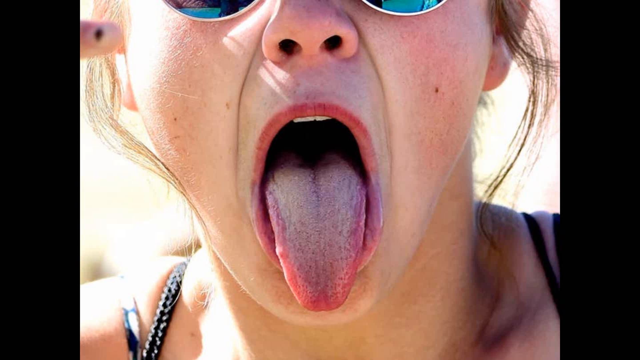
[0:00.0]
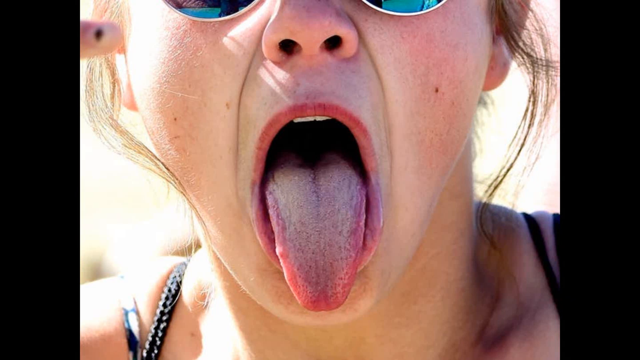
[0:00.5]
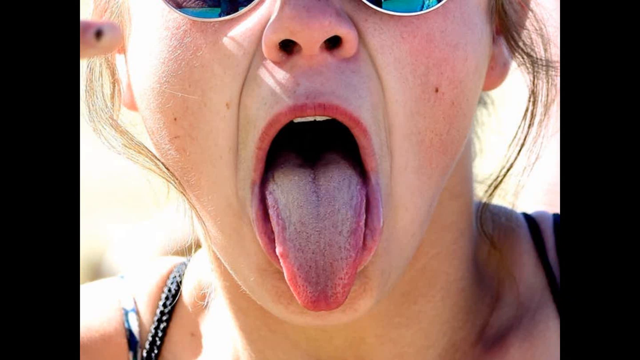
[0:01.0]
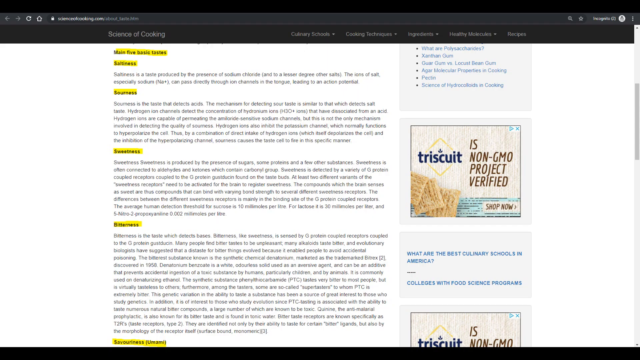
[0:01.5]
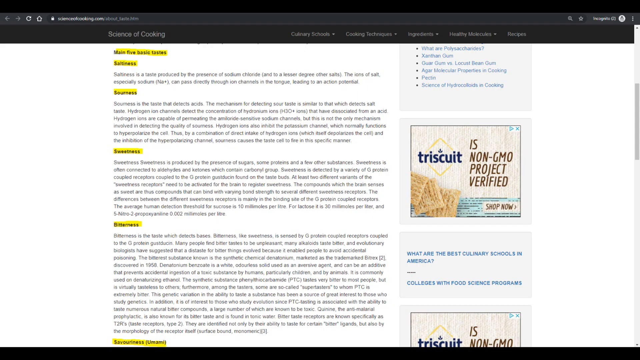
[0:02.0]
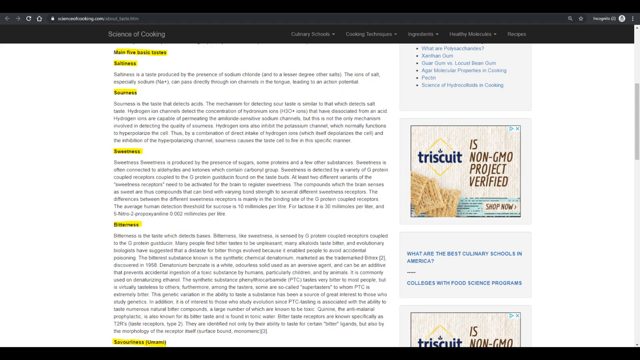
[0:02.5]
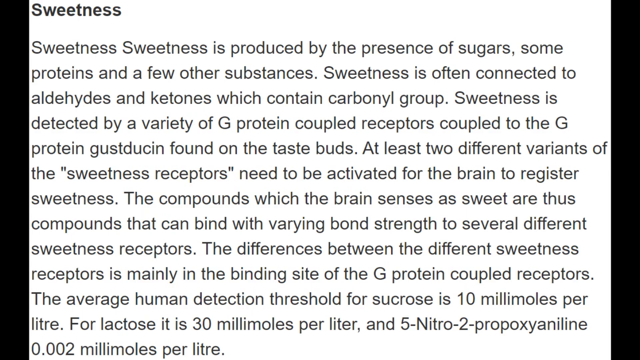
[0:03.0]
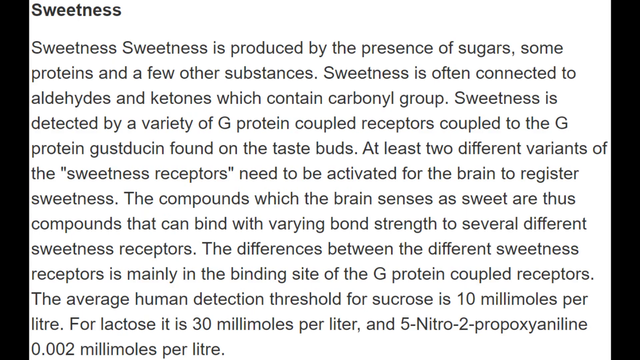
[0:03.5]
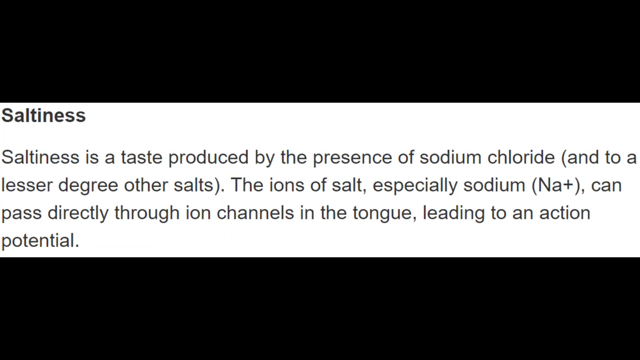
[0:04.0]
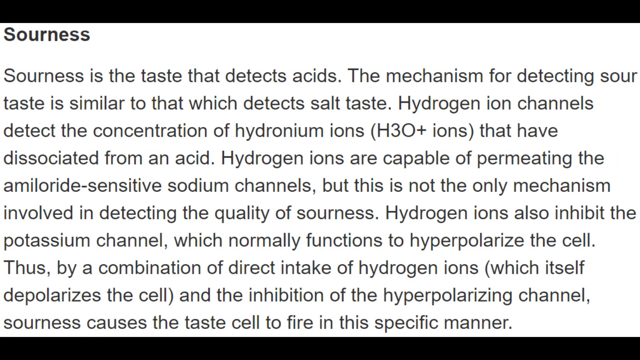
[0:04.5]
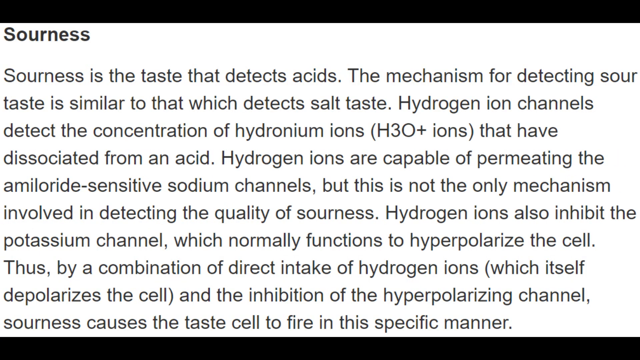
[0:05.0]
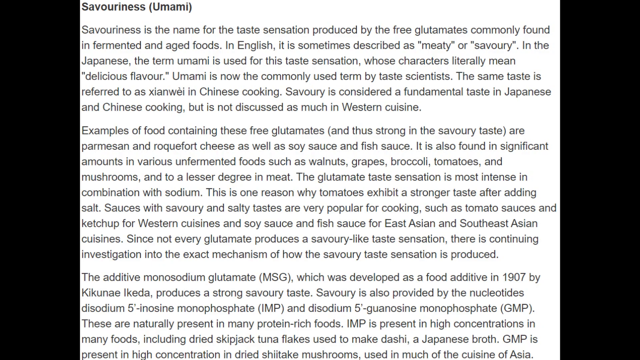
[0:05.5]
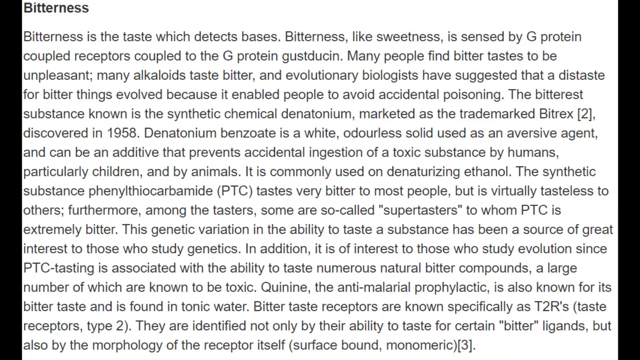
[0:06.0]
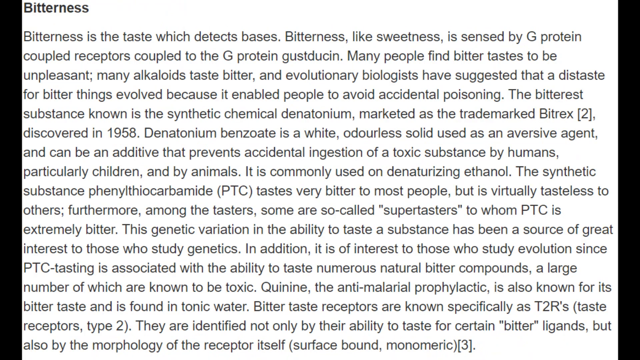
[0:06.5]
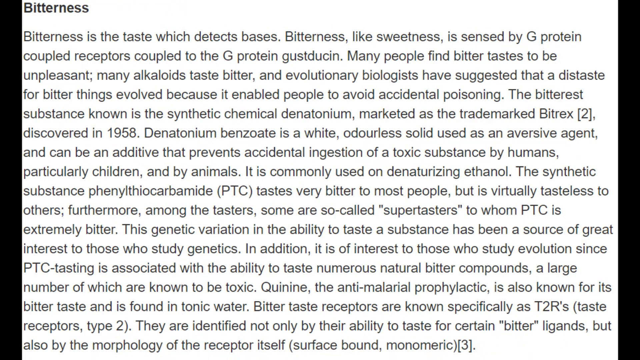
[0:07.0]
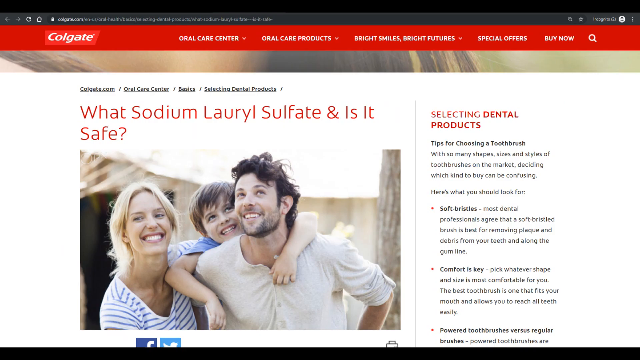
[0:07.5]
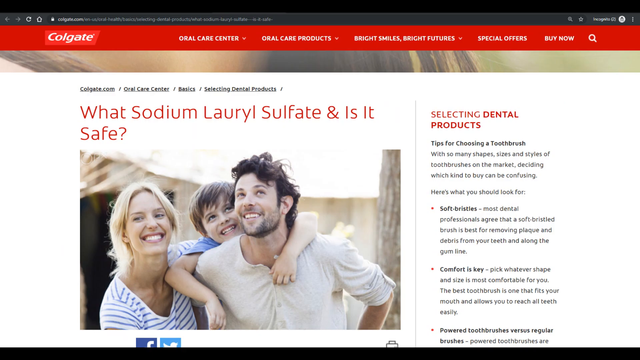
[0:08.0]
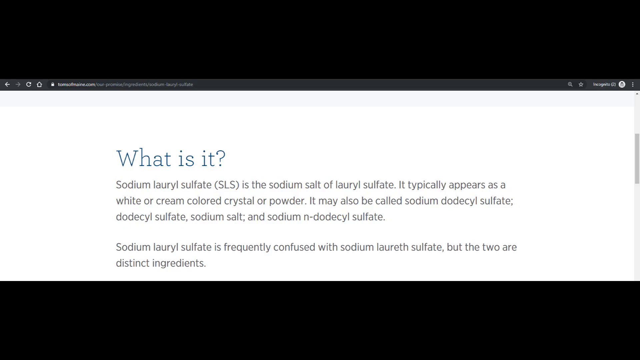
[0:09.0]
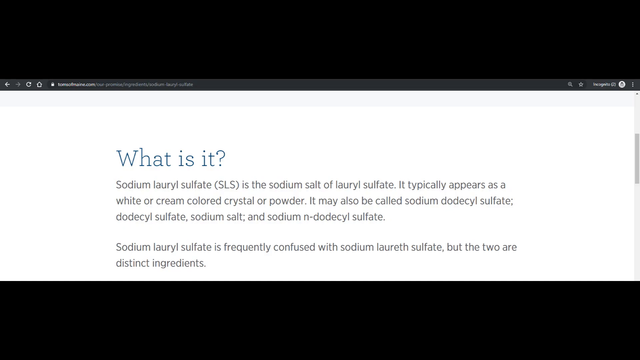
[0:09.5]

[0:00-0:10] A website page from Science of Cooking covers how the sense of taste works, focusing on four key tastes. The page first covers saltiness, caused by sodium or salt passing through channels on the tongue, then sourness, triggered by acidic foods like lemons or vinegar. Next comes a section on sweetness, caused by sugar and similar substances, with sweet foods like candy or fruit. The final section shown is bitterness, found in things like coffee or dark chocolate.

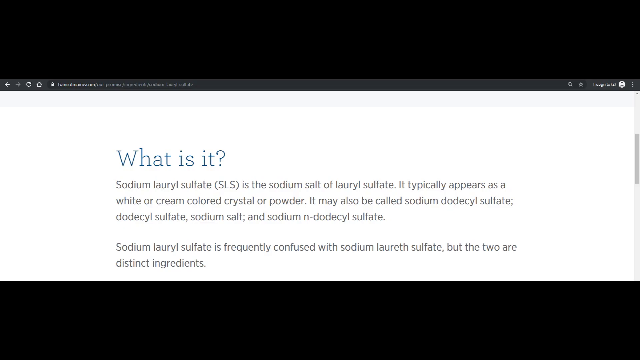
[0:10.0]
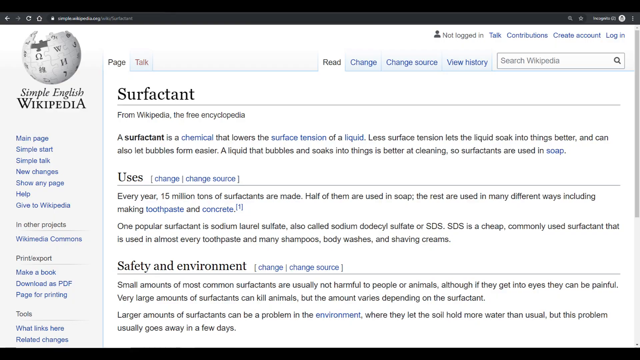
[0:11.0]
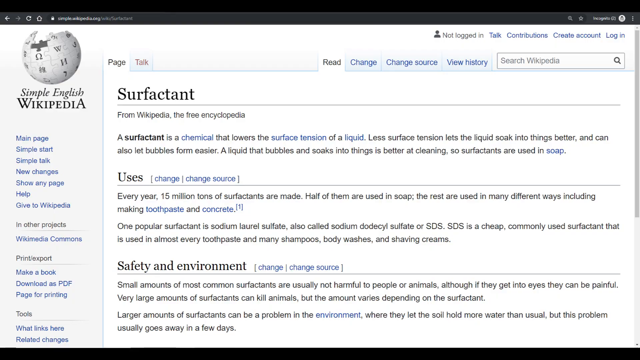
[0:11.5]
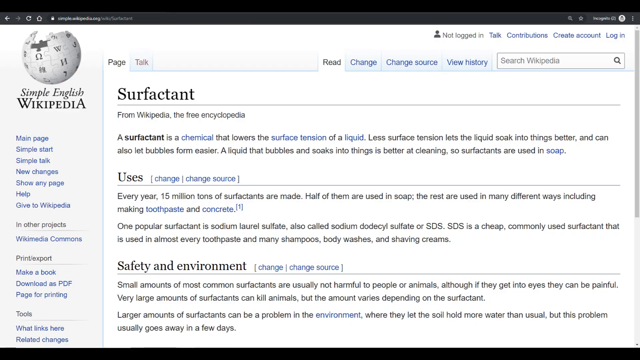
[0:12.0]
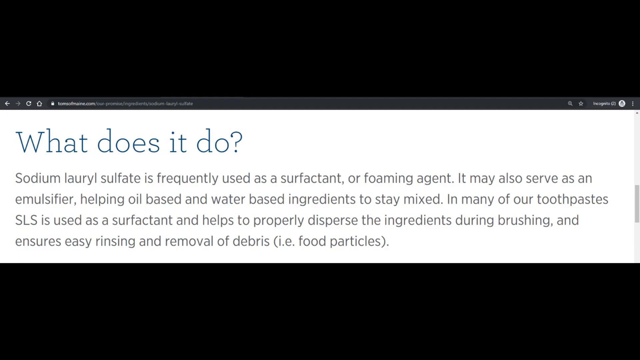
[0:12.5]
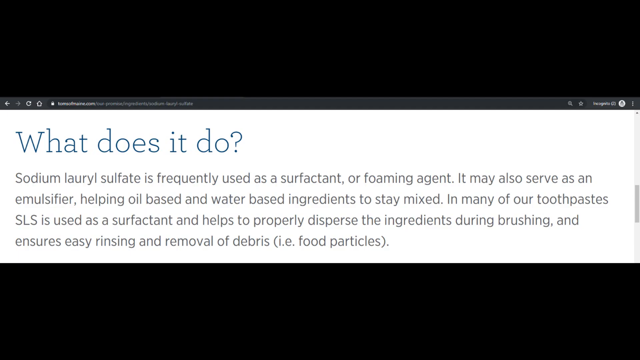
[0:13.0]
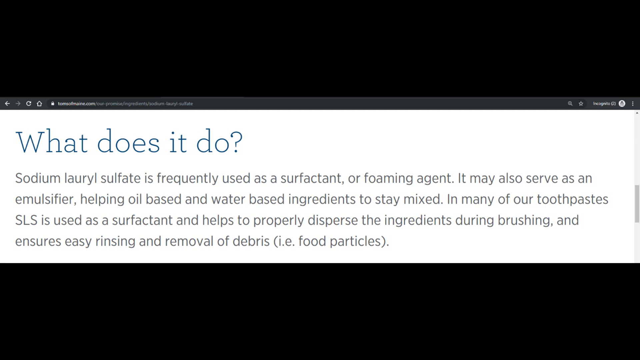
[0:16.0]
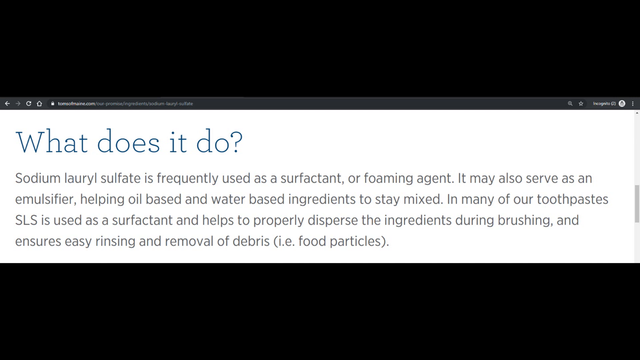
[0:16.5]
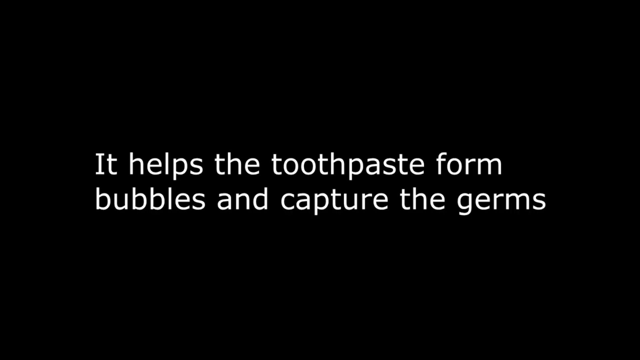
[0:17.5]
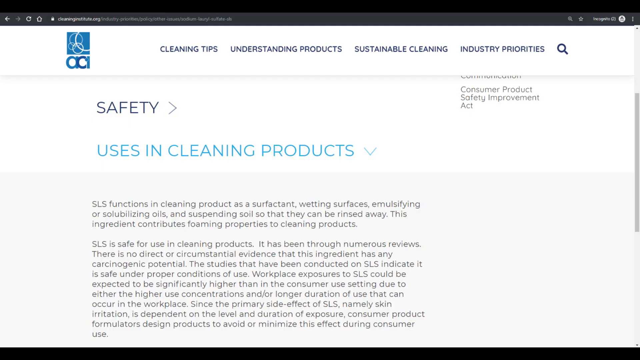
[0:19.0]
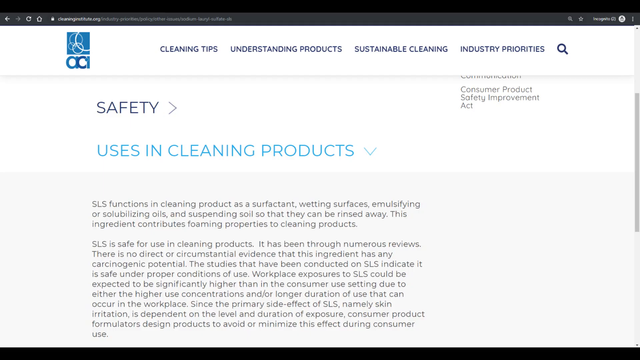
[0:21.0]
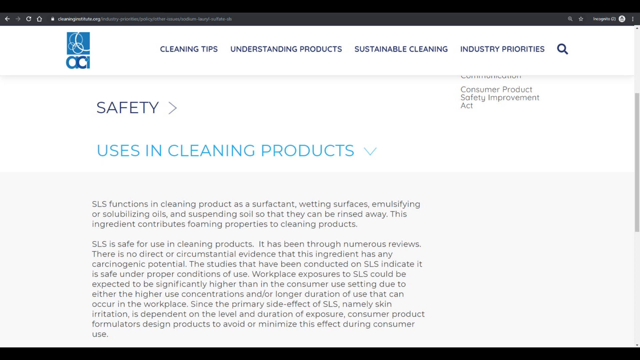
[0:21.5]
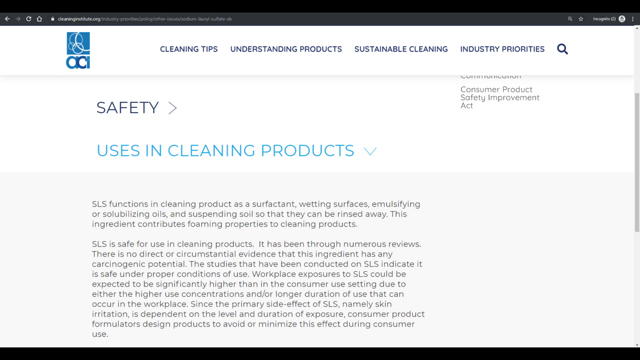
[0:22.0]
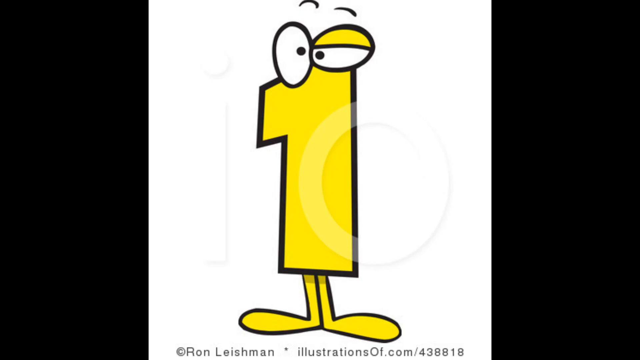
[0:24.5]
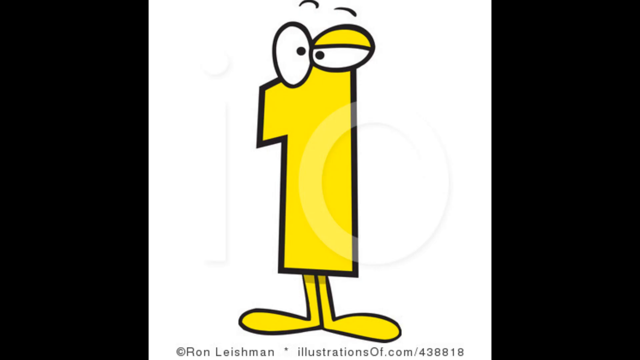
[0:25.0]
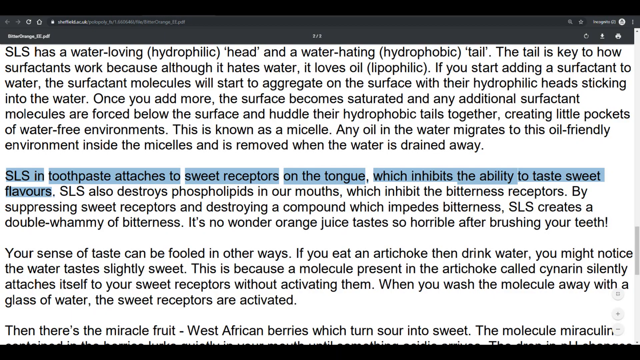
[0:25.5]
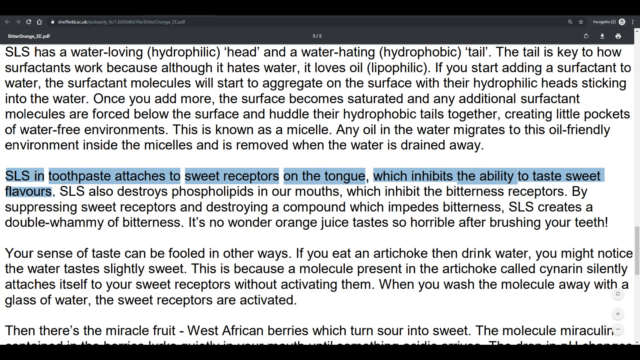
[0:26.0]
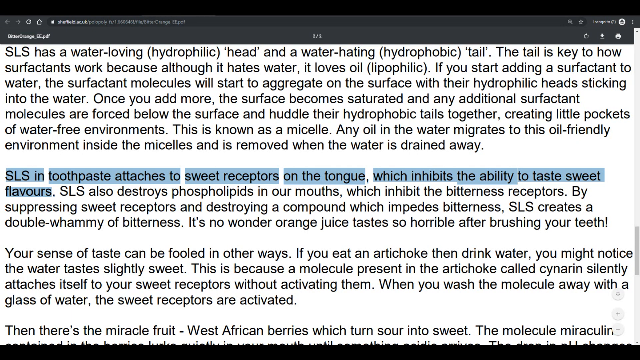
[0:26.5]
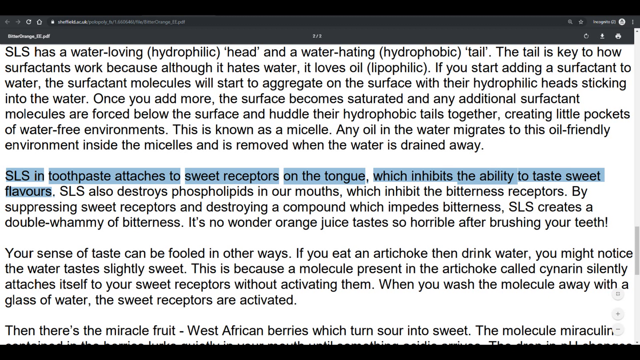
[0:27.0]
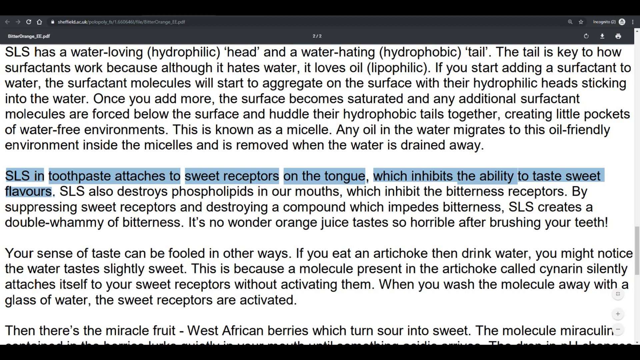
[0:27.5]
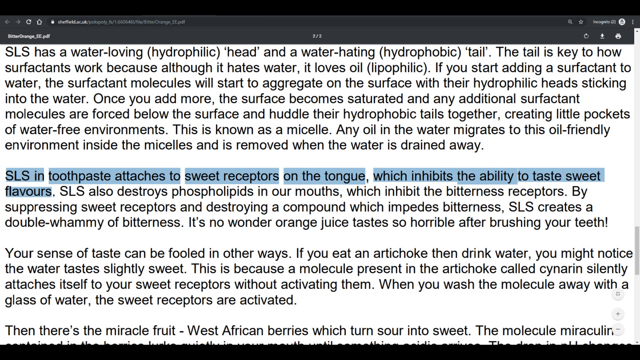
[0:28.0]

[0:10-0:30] The content turns to SLS, or sodium lauryl sulfate, a soap-like chemical found in products like toothpaste. Text reads in part "which inhibits the ability to taste sweet flavors. Your senses of taste can be fooled in other ways. If you eat an artichoke then drink water you might notice the water tastes slightly sweet."